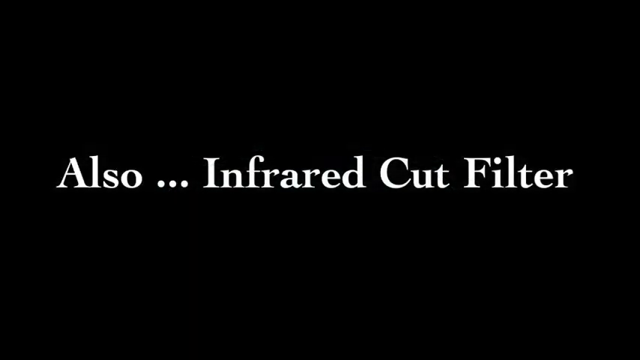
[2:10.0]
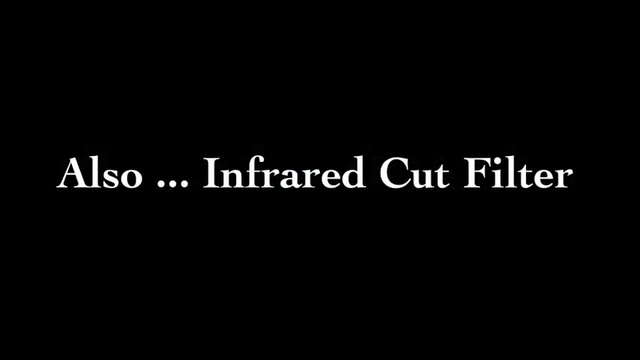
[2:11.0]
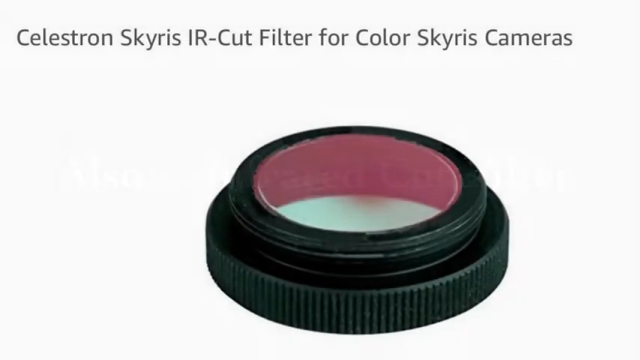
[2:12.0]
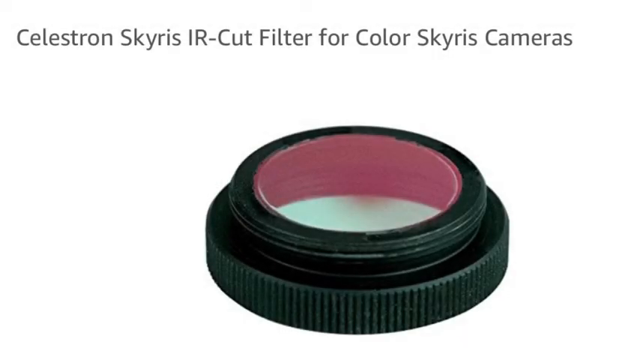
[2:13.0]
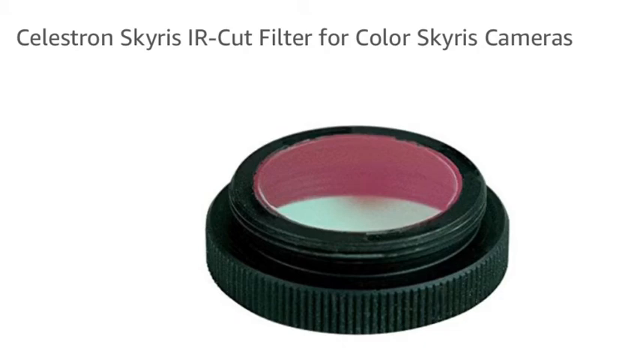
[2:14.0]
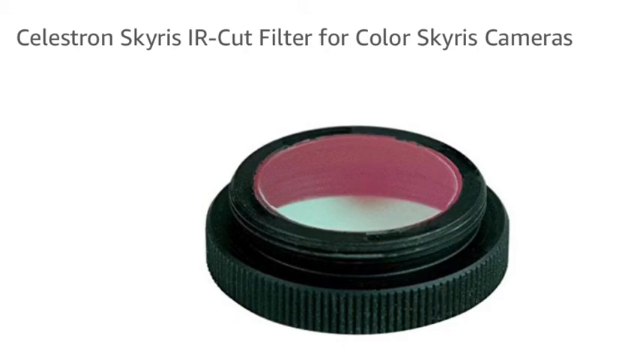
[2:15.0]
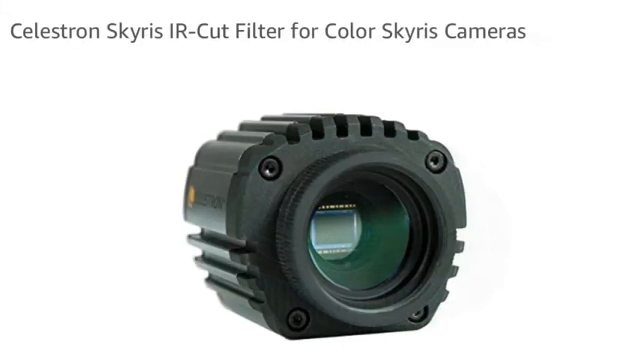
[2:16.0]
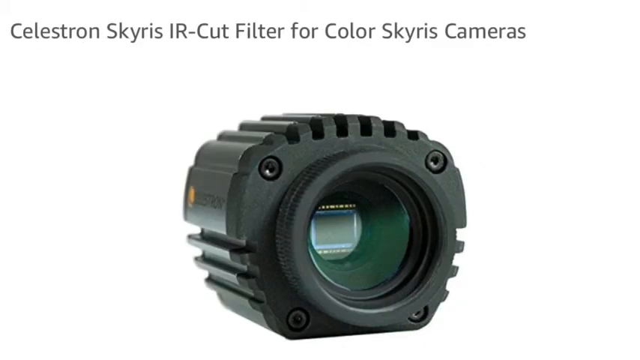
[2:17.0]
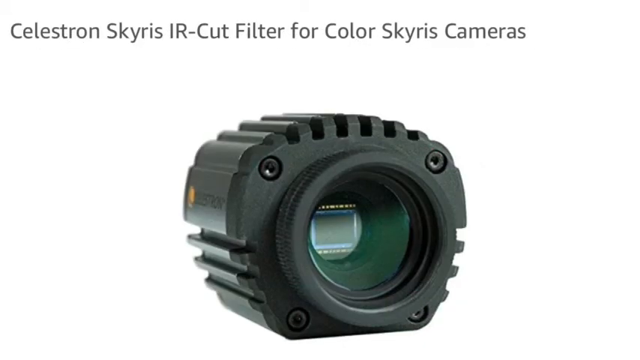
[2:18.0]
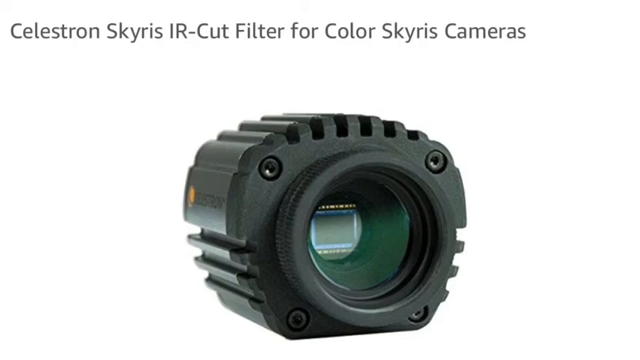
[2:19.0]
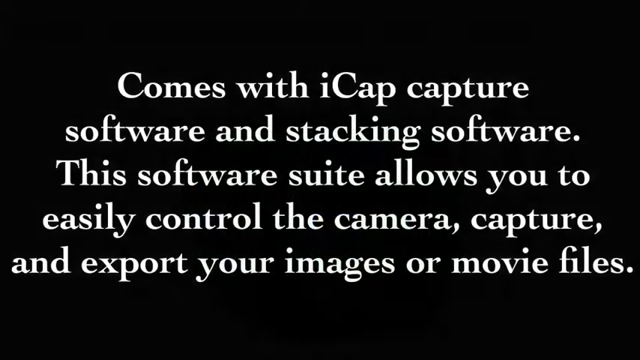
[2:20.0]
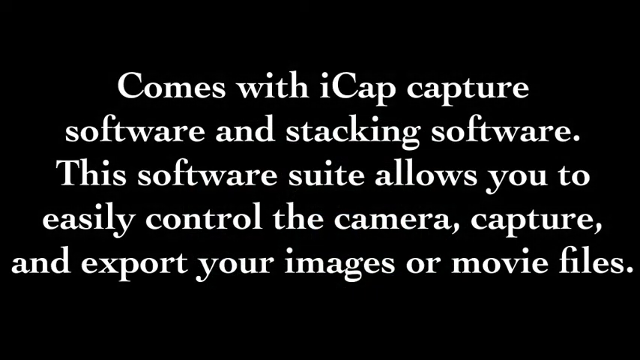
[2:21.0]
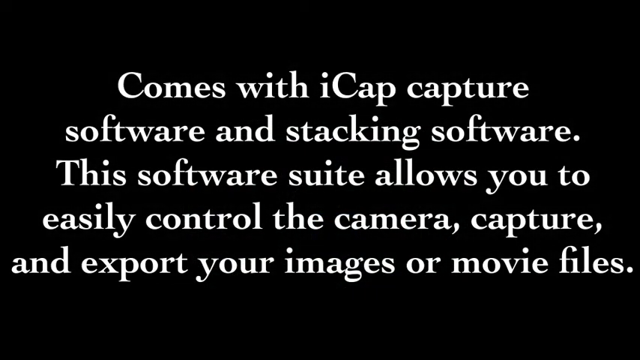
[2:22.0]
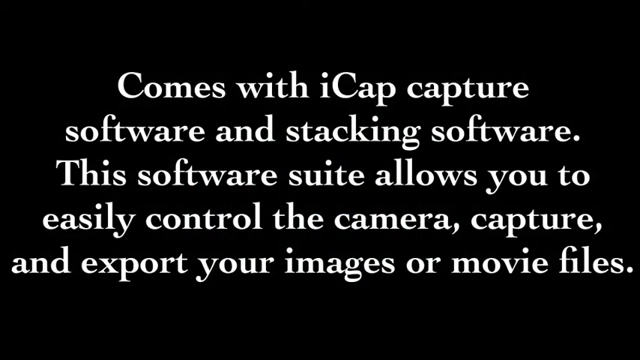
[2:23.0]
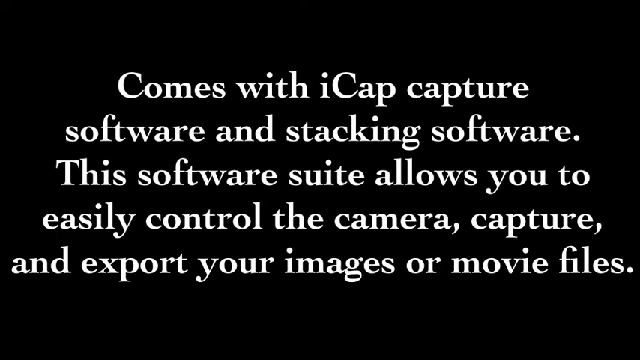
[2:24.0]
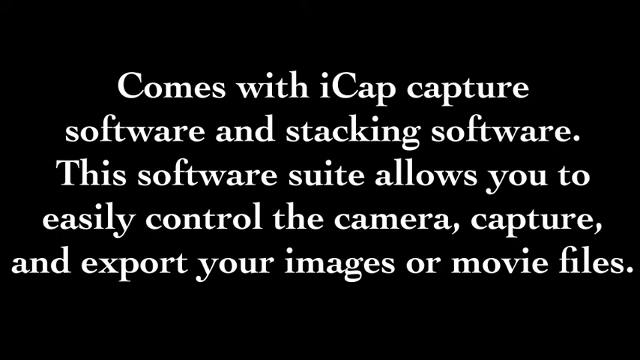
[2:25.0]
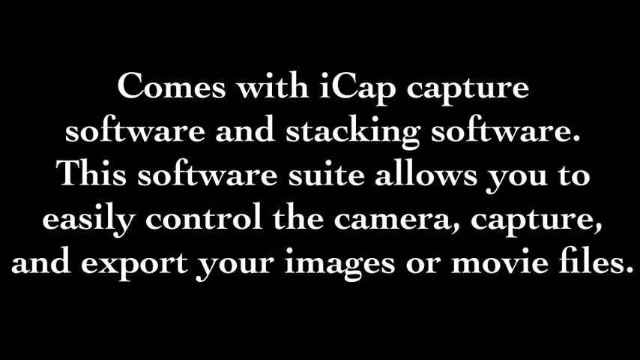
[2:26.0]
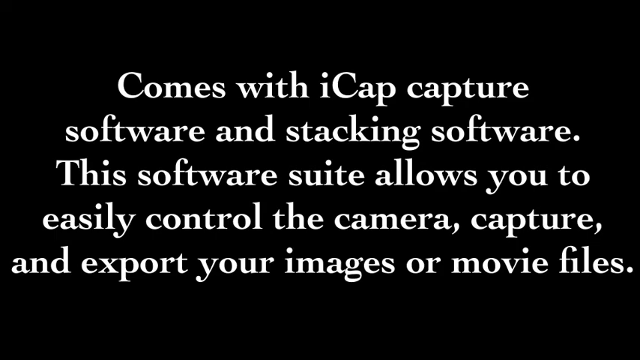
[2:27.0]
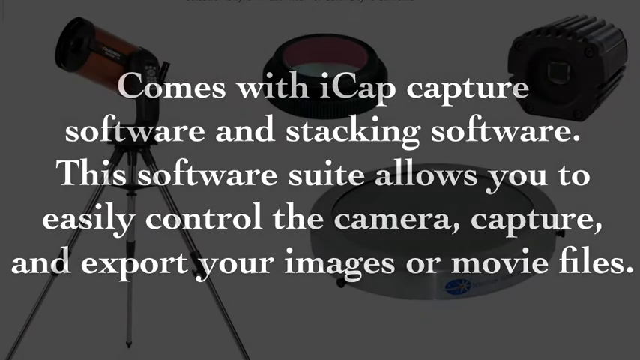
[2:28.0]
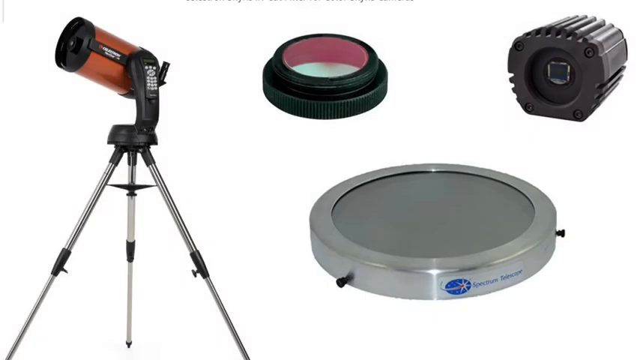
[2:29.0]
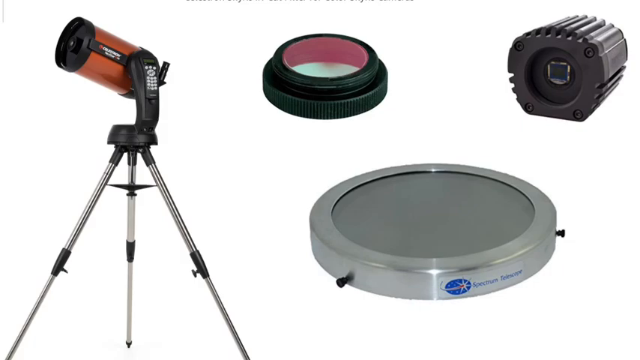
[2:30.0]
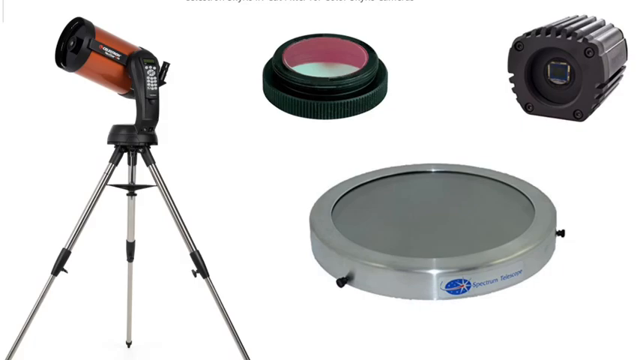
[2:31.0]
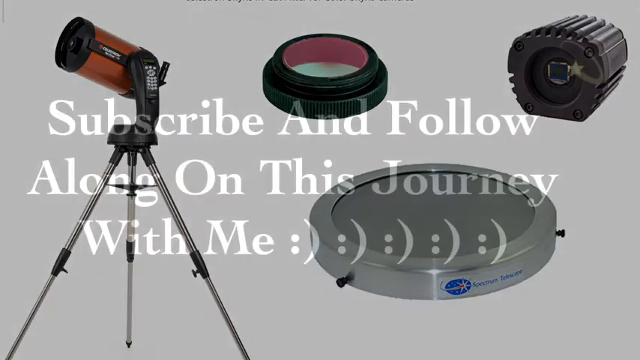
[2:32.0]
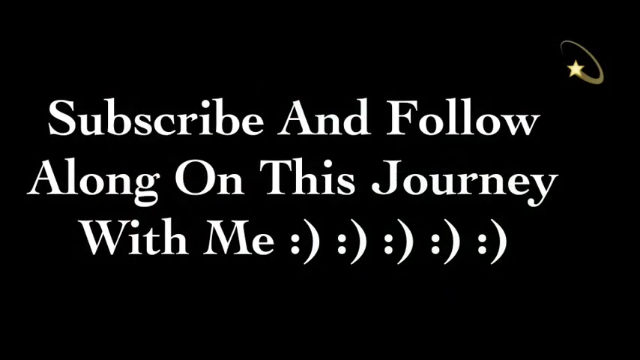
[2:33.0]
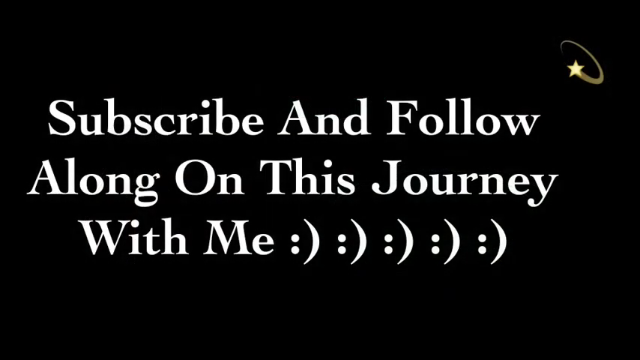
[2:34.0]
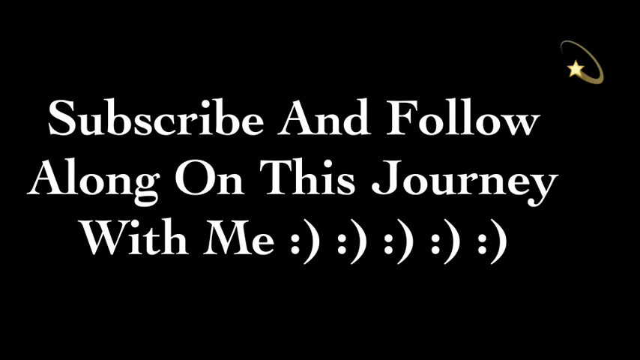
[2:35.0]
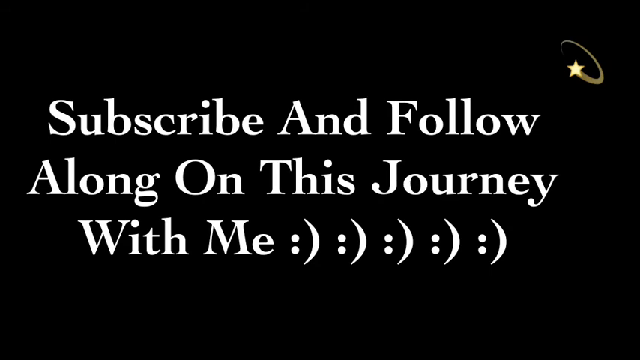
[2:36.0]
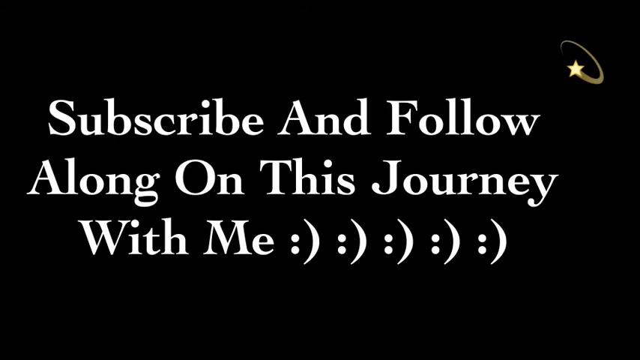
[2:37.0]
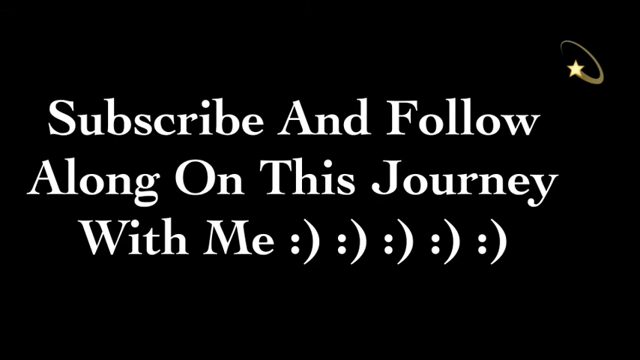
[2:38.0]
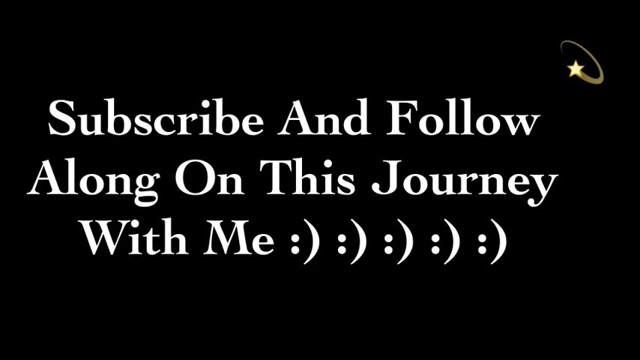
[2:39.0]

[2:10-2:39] A black background shows bolded white text in the center that says "also... infrared cut filter". It transitions to a white background with gray bolded text at the top that says "Celestron Skyris IR cut filter for color Skyris cameras", with the black and red filter laying in the center. Another screen with text at the top saying "Celestron Skyris IR cut filter for color Skyris cameras" shows one of those pieces in black. Then a black background shows bolded white text that says "comes with iCAP capture software and stacking software. This software suite allows you to easily control the camera capture and export your images or movie files." Next, a white background shows the telescope on the tripod stand, the spectrum telescope part to the right, and two additional parts above it. Finally, a black background shows bolded white text that says "subscribe and follow along on this journey with me" with three smiley faces and an extra two, and a little star in the top right corner.